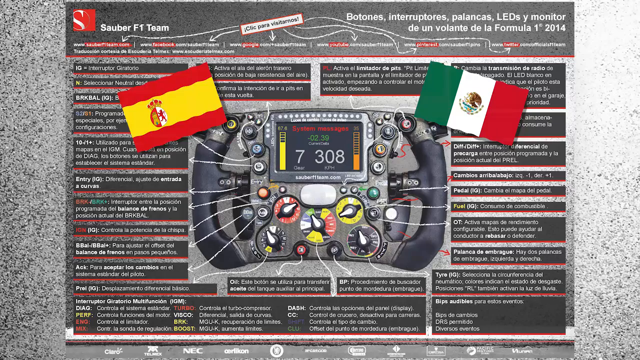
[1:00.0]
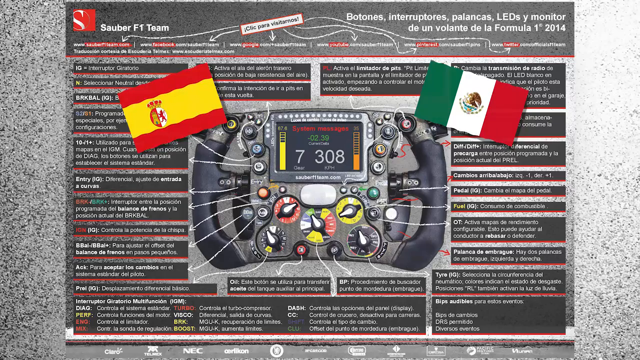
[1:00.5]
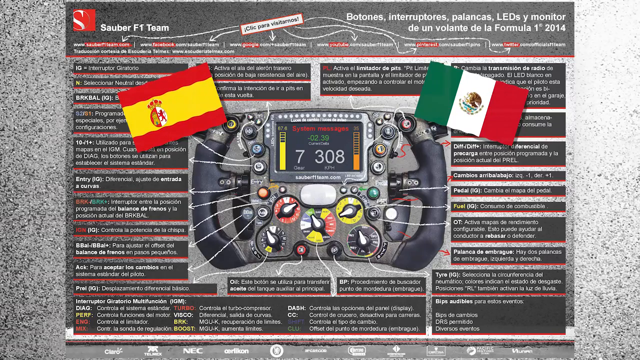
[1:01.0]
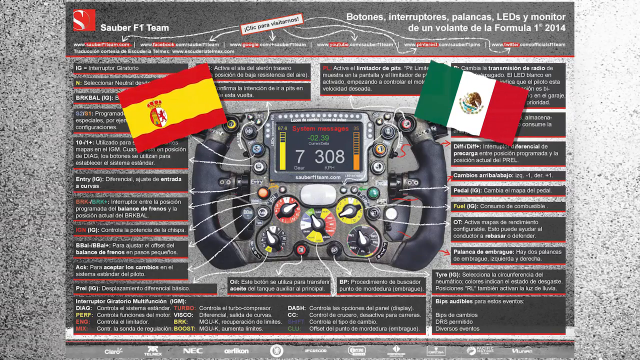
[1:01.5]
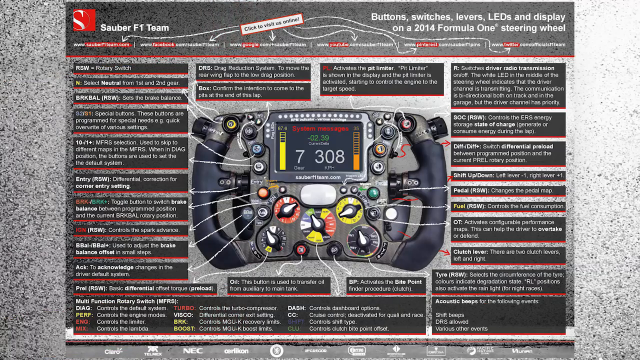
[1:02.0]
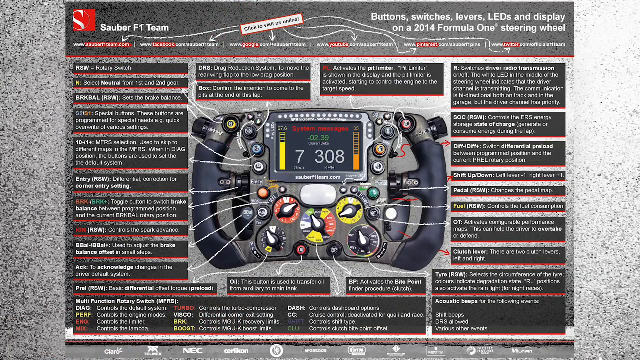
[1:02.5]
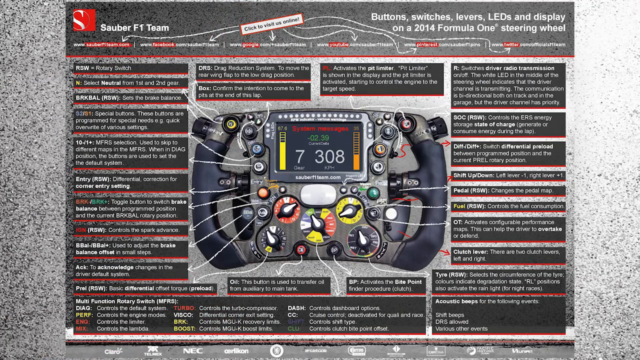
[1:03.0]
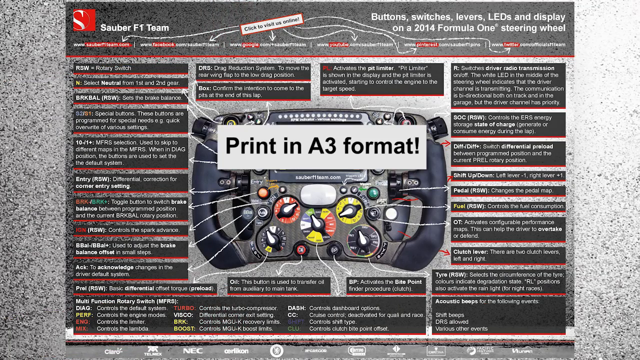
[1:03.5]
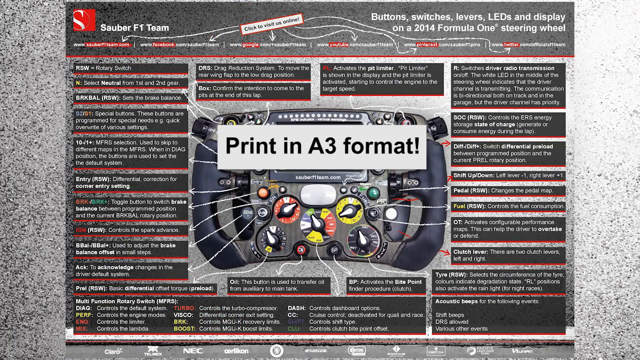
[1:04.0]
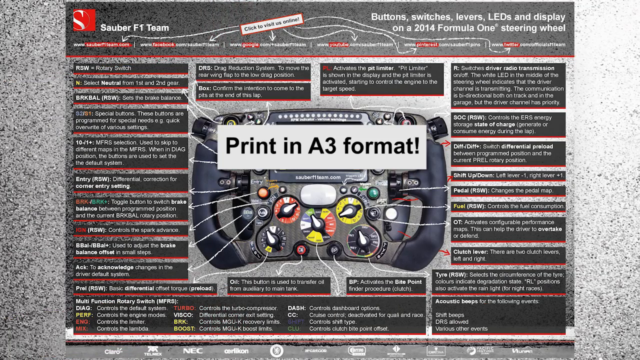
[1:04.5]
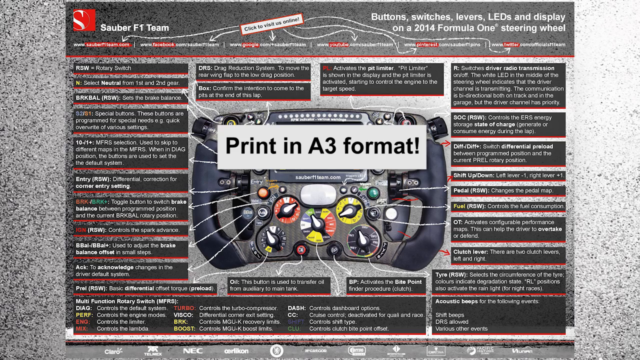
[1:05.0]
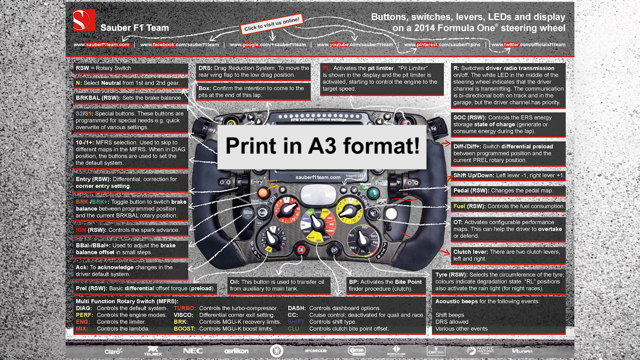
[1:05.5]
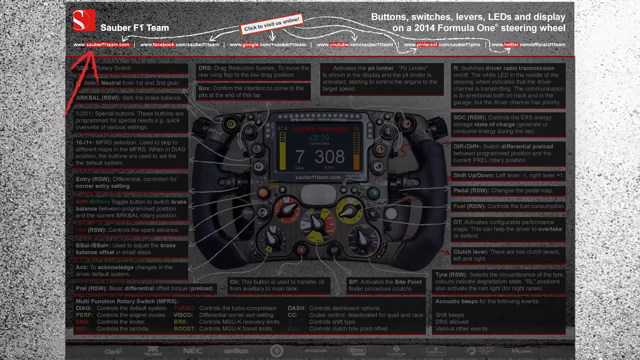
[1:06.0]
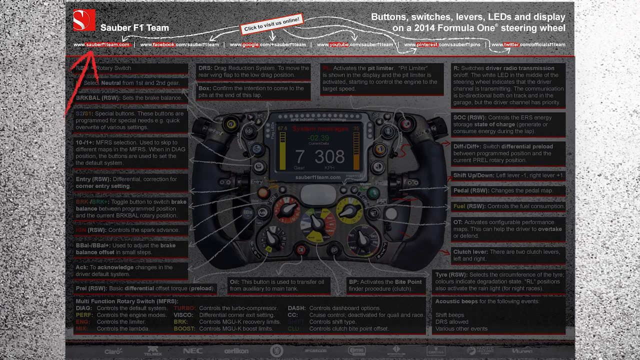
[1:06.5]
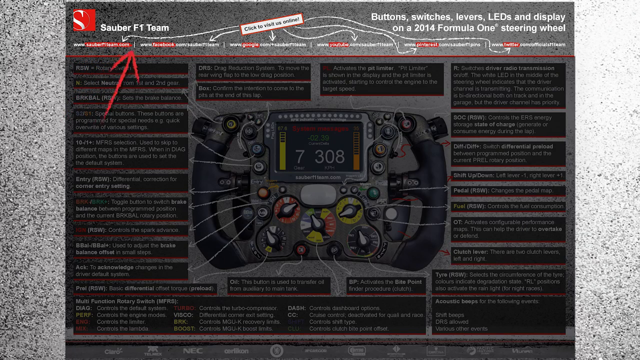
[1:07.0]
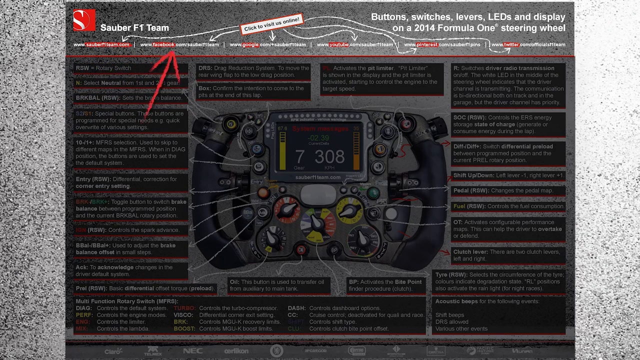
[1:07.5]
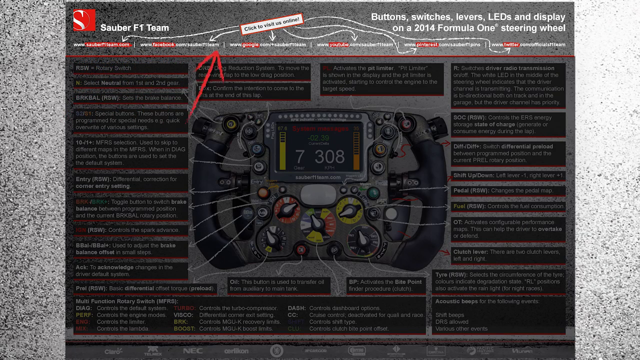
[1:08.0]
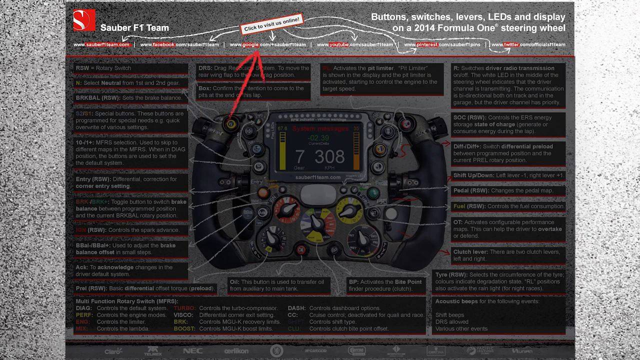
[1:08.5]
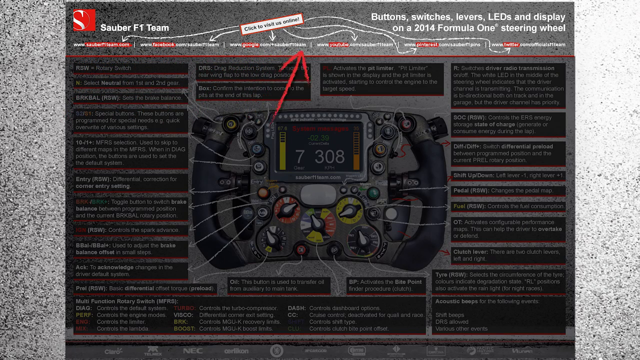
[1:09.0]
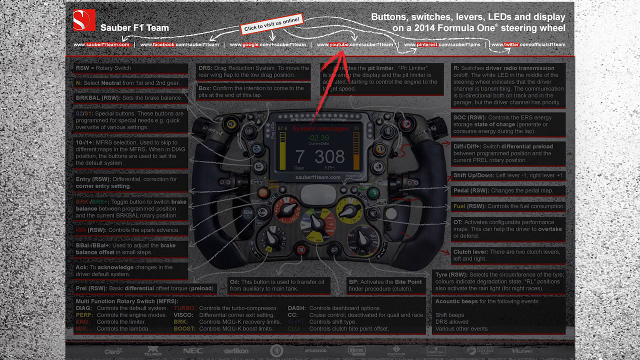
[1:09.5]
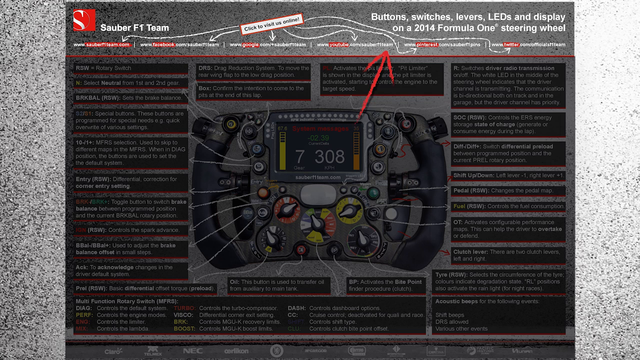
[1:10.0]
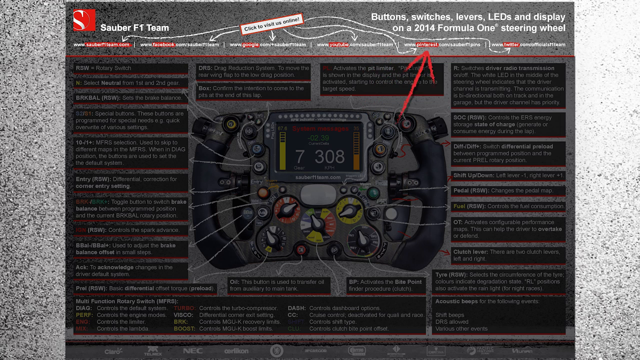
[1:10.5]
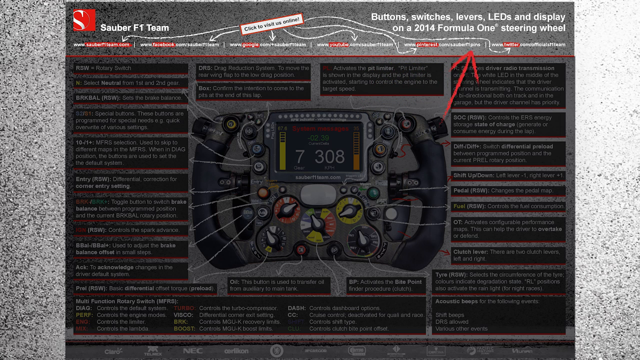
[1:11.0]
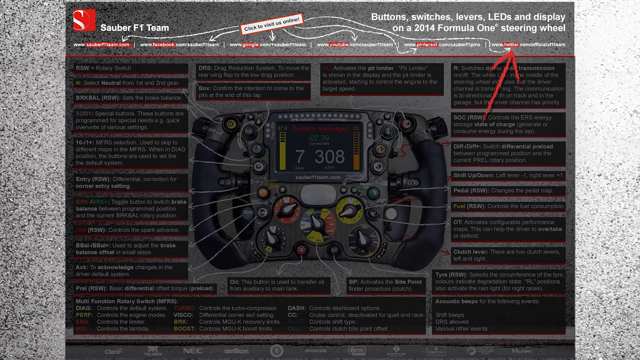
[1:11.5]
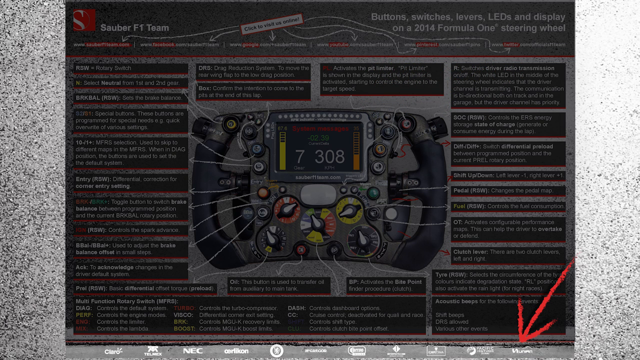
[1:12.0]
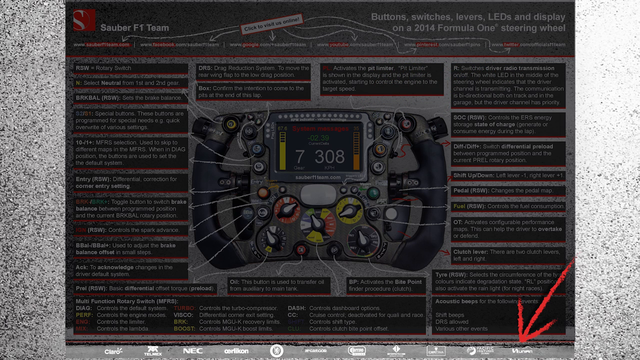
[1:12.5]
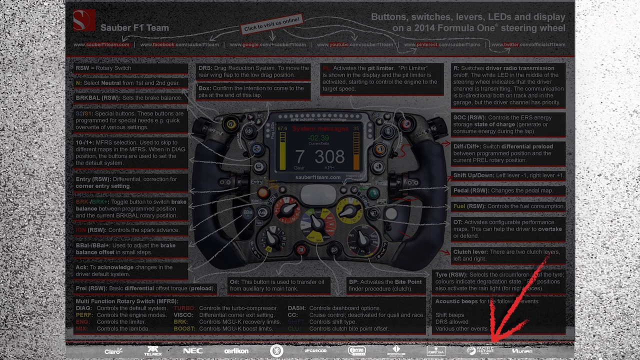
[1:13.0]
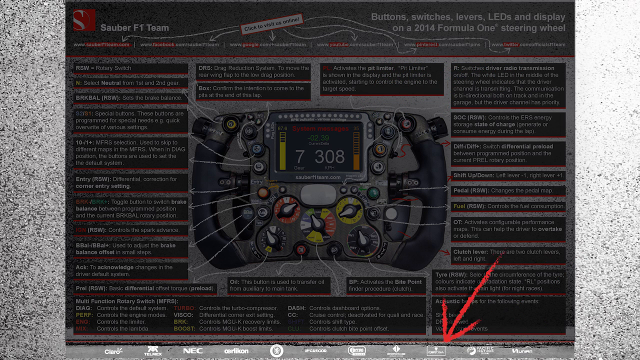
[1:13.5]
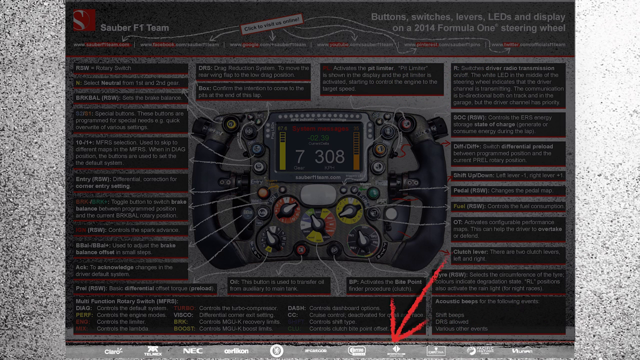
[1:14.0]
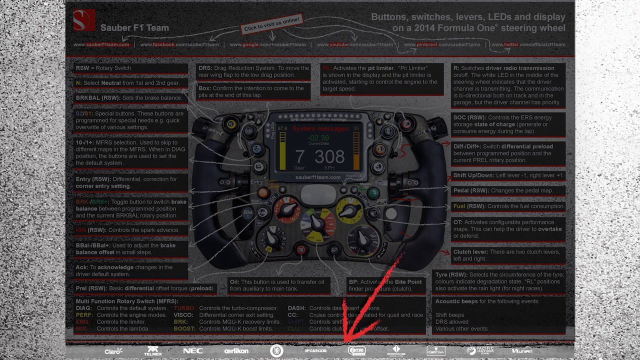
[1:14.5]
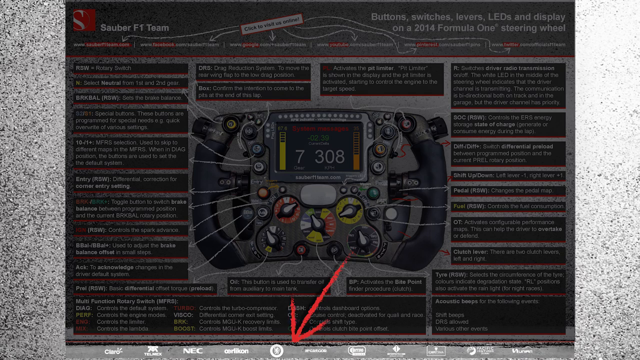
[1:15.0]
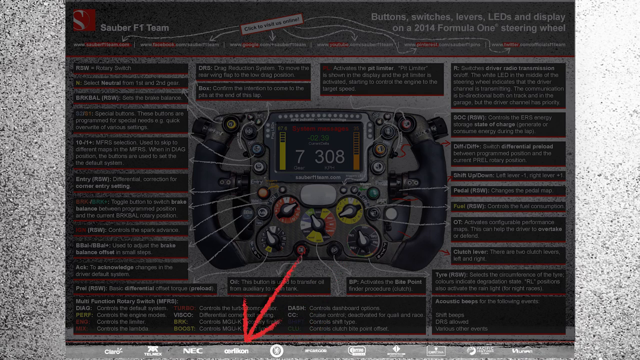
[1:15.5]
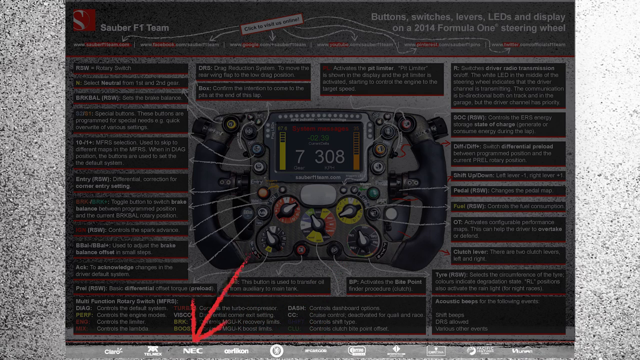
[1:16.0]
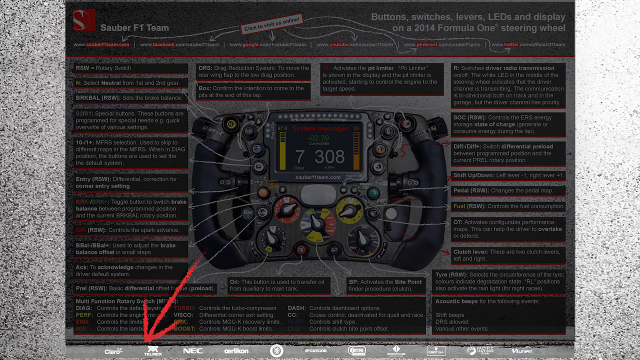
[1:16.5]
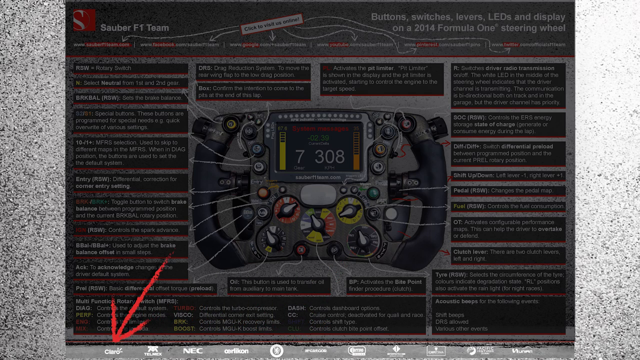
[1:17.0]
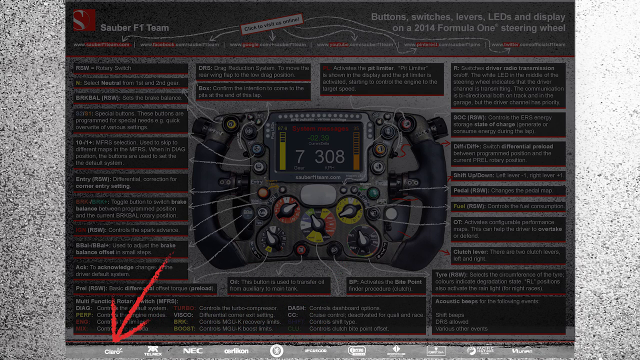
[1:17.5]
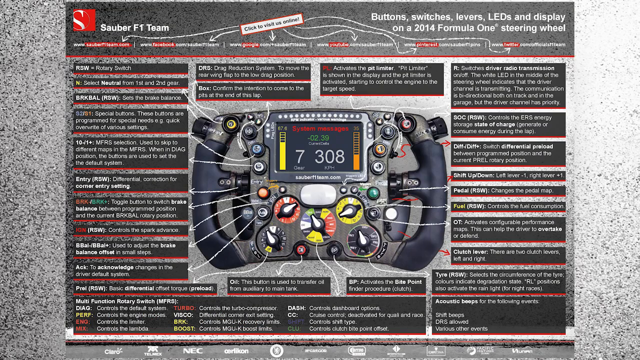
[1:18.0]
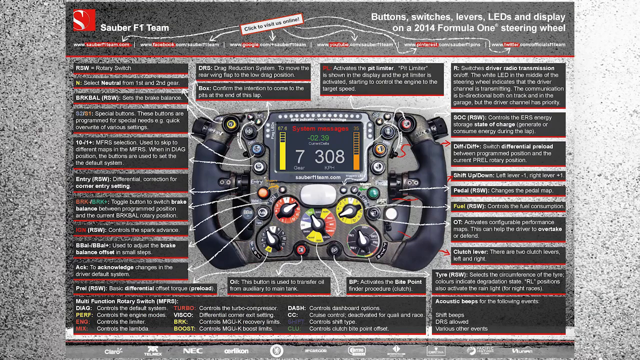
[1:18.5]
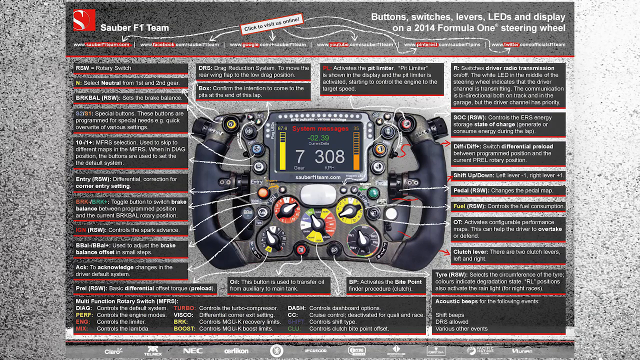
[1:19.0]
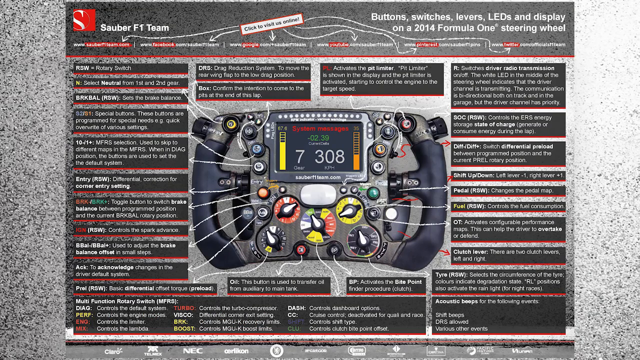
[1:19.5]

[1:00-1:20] The brochure appears in different languages, with two flags for two different countries, and the controller is still visible. The video then flashes to another brochure, apparently in English though the font is very blurry, which reads "print in a3 format". It shows the button switches, levers, LEDs and displays on a 2014 Formula One steering wheel, seemingly some kind of video game device. An angled red arrow points up at all the items on the top part of the screen, then moves down and points at the items on the bottom half: it travels from left to right along the top and from right to left along the bottom. The background is speckled gray, white and black, resembling concrete. The colors are mainly black, gray and white with some red accents, and the controller shows yellows and reds.